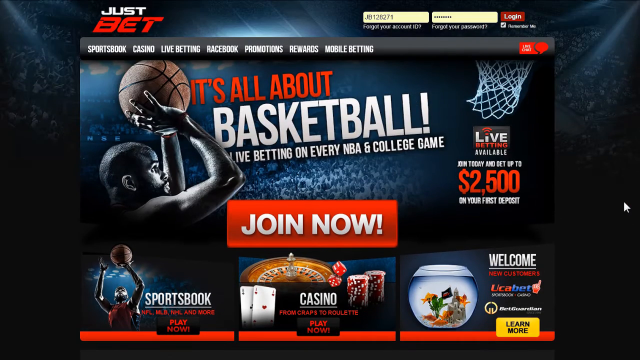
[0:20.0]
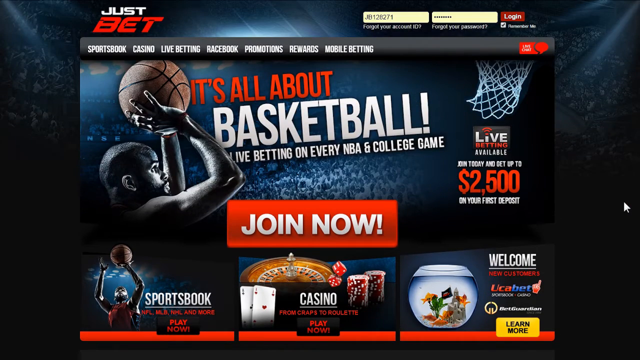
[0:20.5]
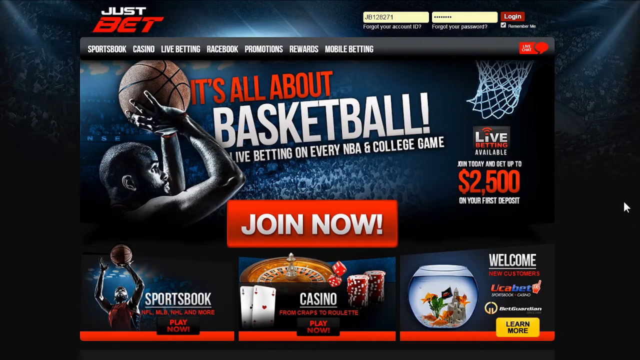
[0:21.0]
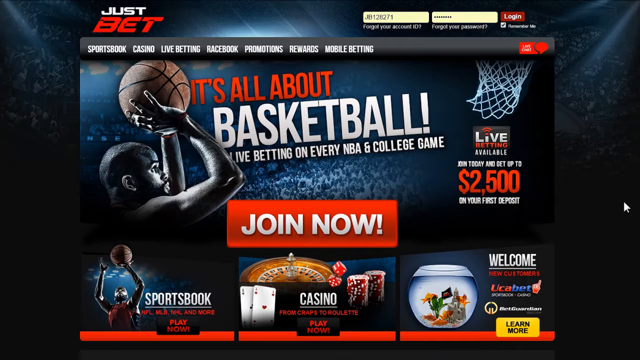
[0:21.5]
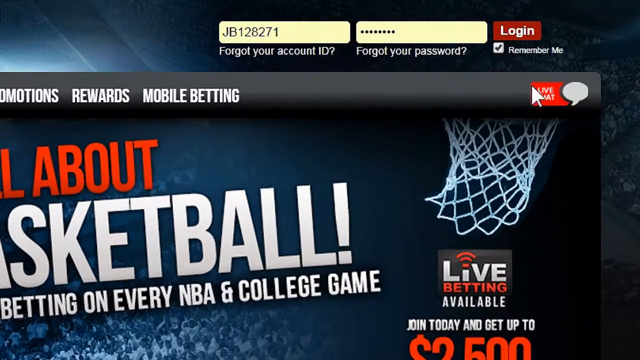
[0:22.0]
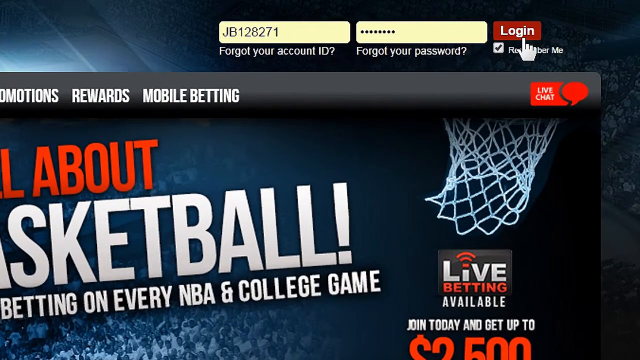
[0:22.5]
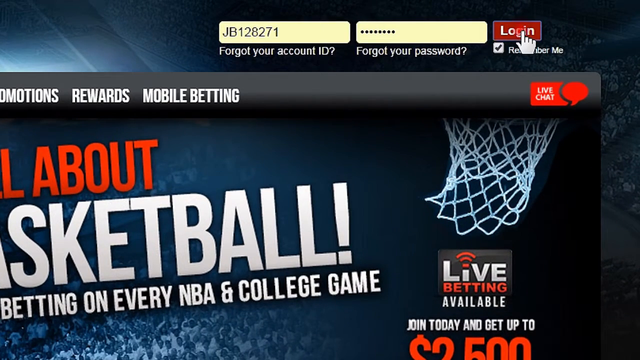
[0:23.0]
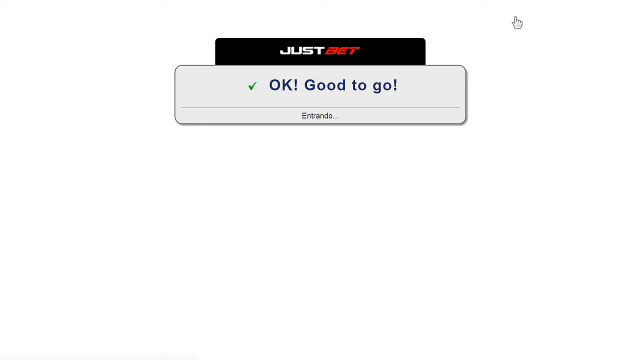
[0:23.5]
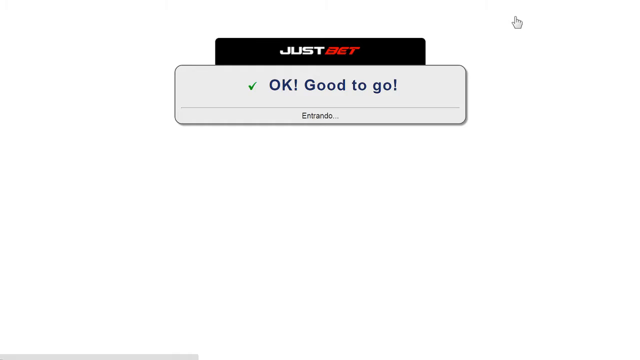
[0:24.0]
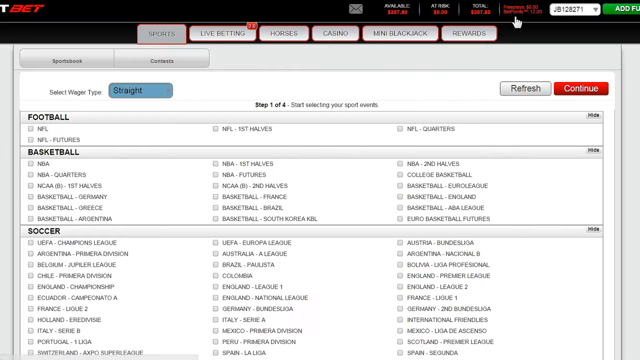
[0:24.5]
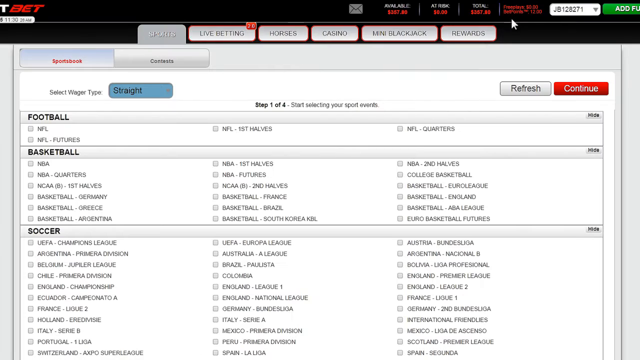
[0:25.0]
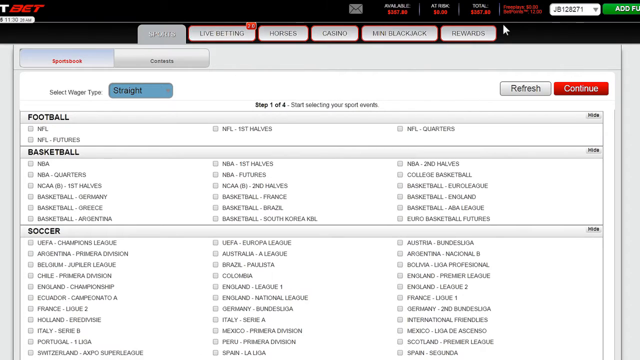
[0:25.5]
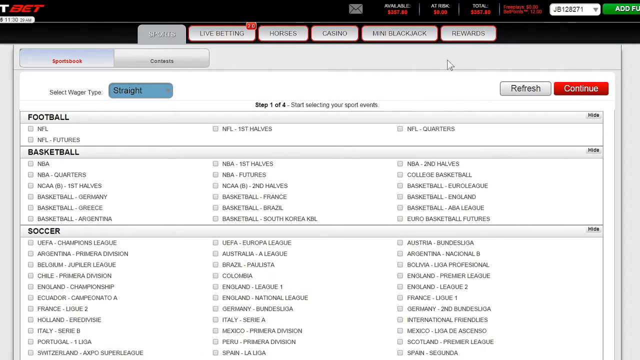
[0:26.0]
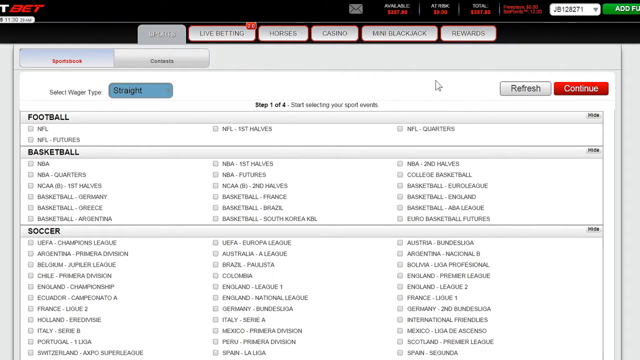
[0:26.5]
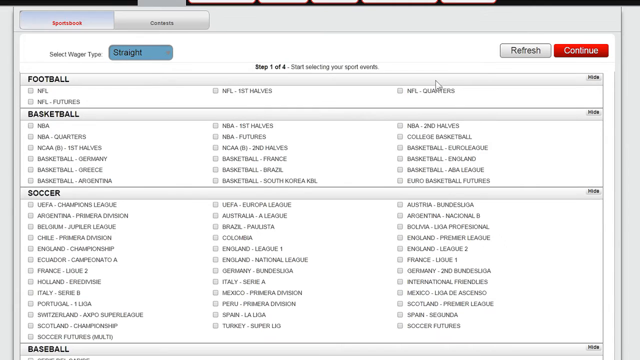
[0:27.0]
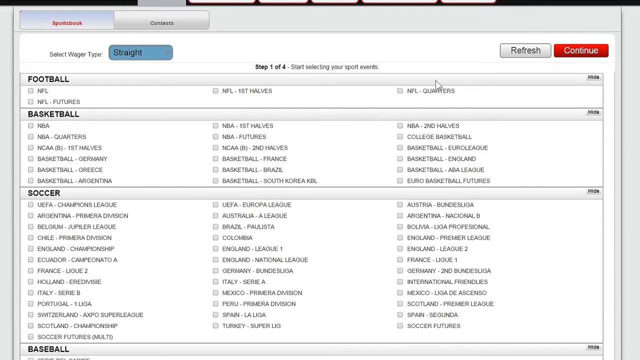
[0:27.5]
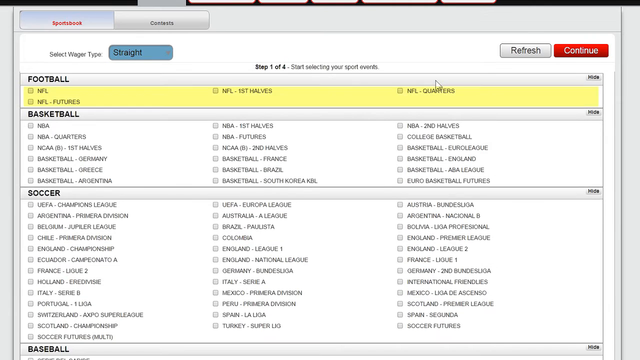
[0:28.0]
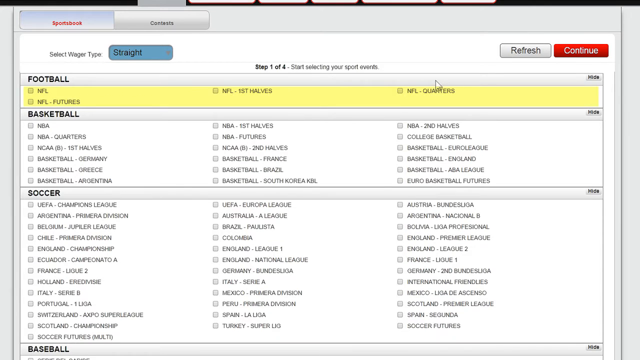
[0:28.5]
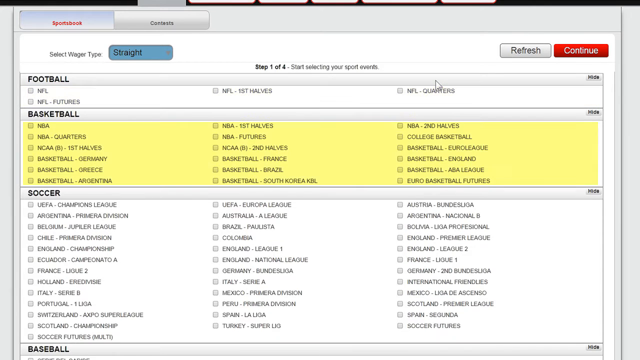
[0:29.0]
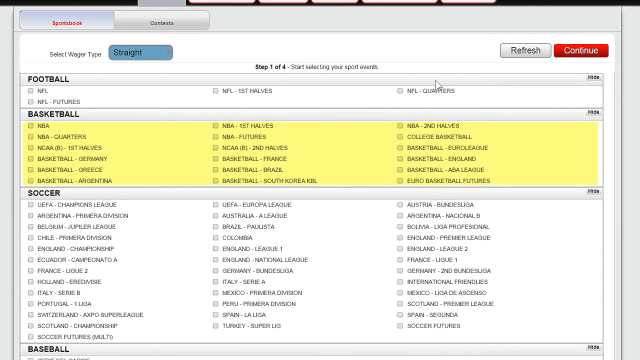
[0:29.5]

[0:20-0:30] A live, working betting web page is shown. Someone clicks at the top, which opens a window reading "just bet" with the text "Okay!" and "Good to know!" There is a green check mark with "entrando" underneath. The page then shows "mini blackjack" and "rewards." A cursor moves around, highlighting football and then basketball, and the page returns to the basketball section.